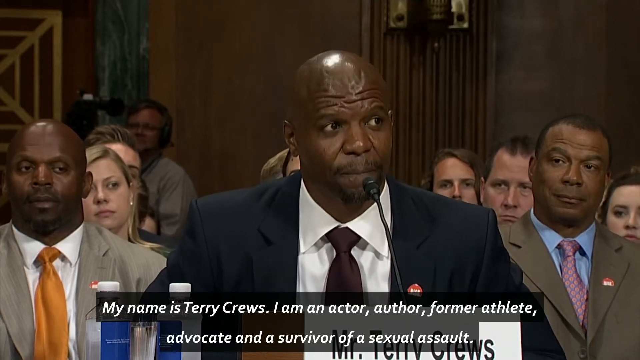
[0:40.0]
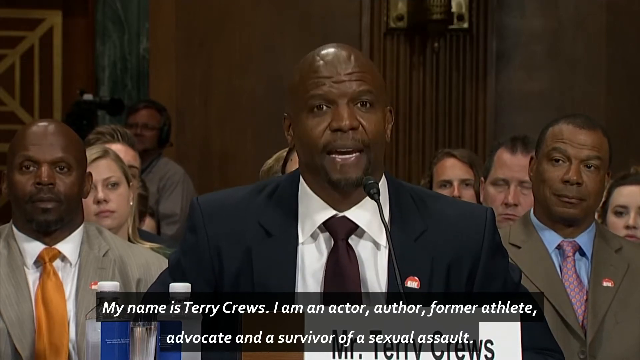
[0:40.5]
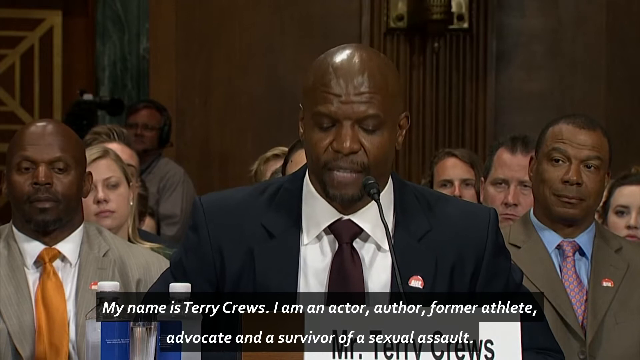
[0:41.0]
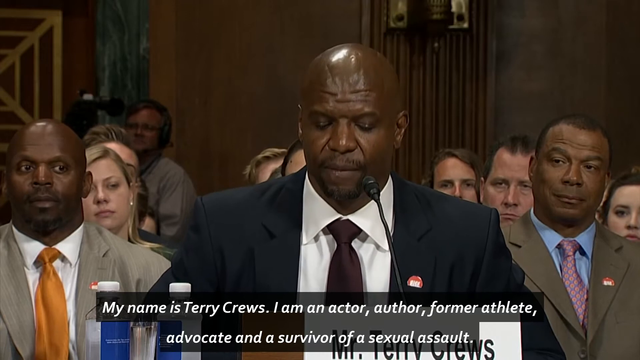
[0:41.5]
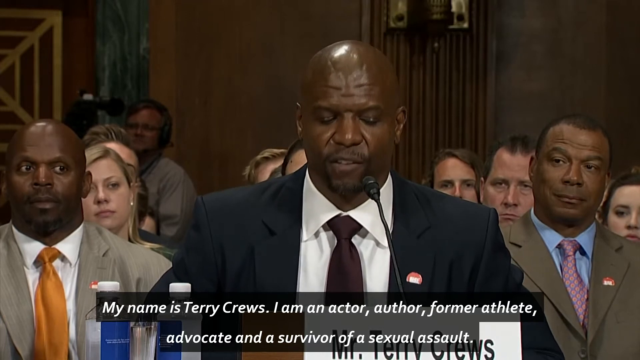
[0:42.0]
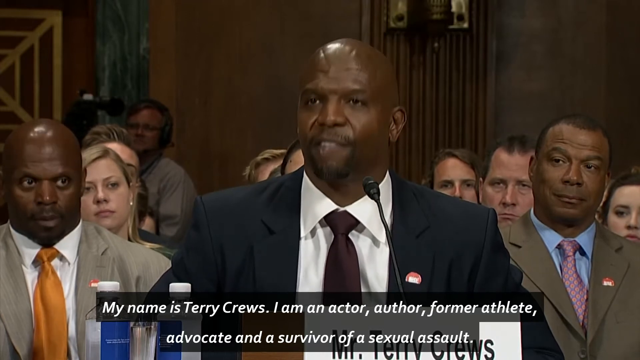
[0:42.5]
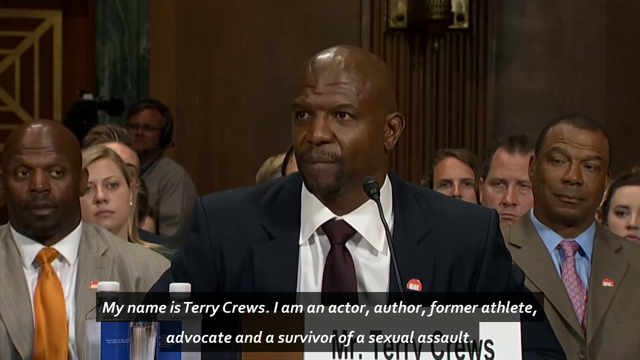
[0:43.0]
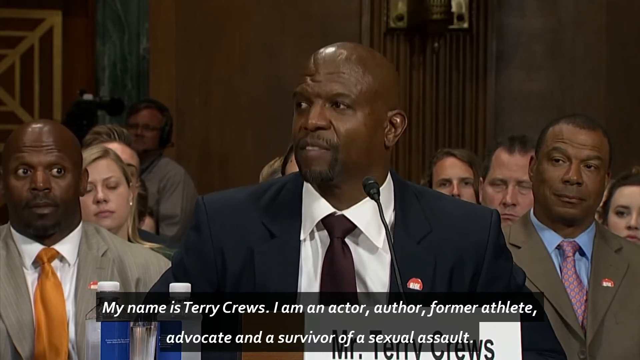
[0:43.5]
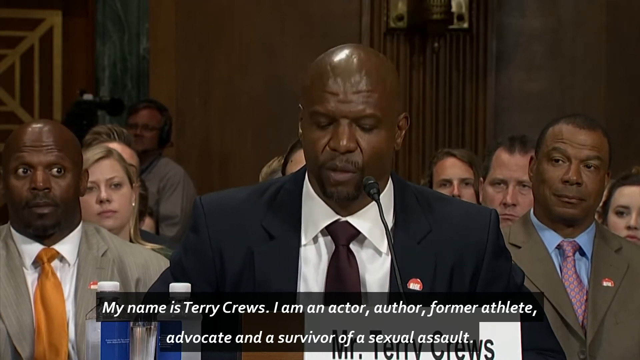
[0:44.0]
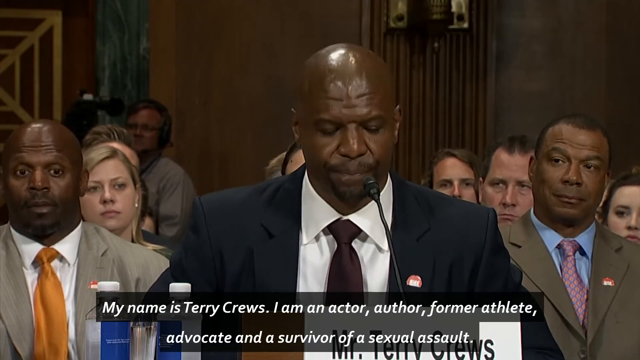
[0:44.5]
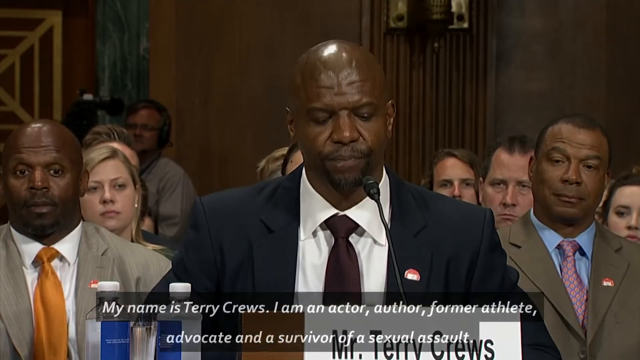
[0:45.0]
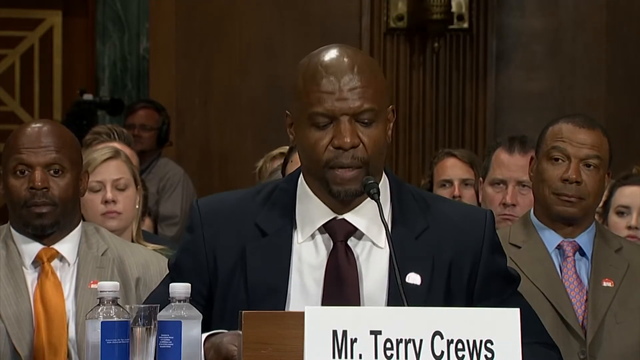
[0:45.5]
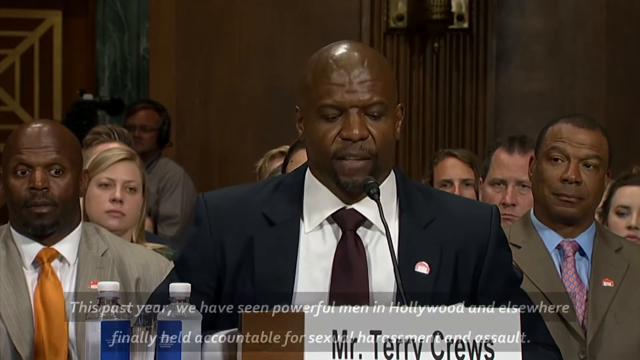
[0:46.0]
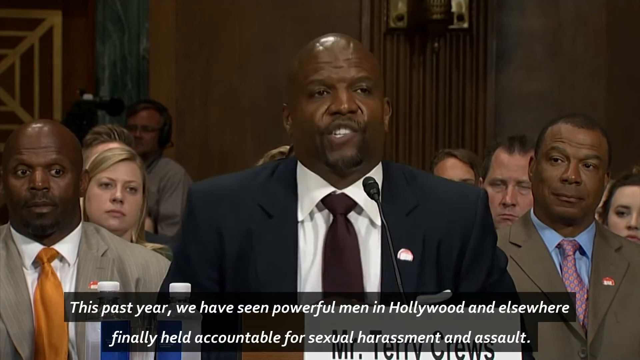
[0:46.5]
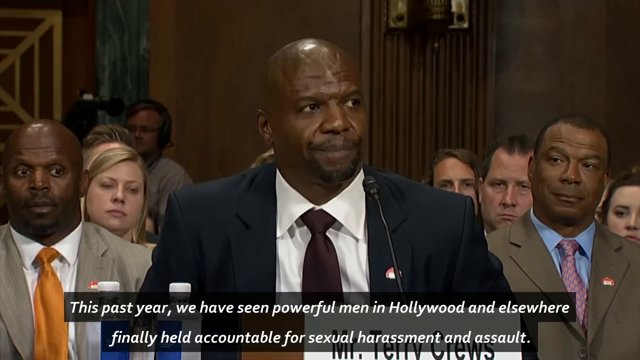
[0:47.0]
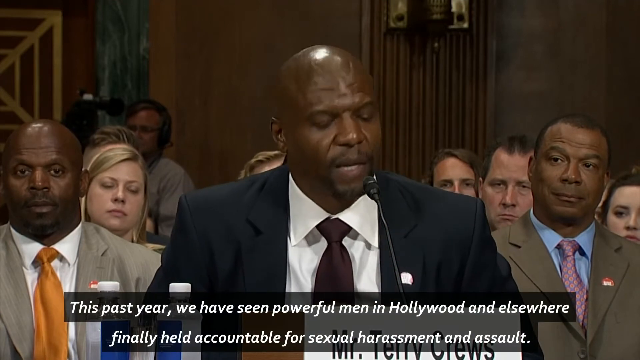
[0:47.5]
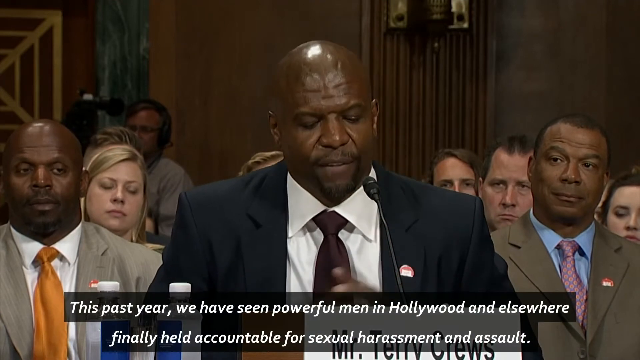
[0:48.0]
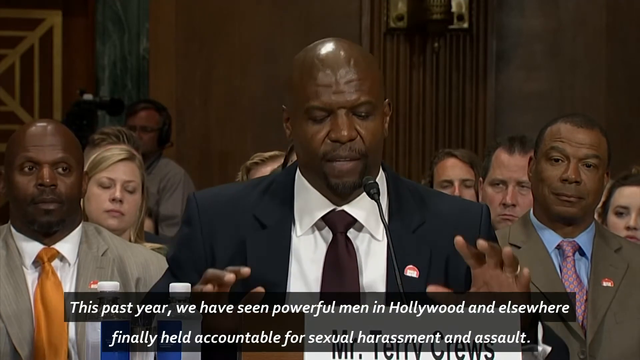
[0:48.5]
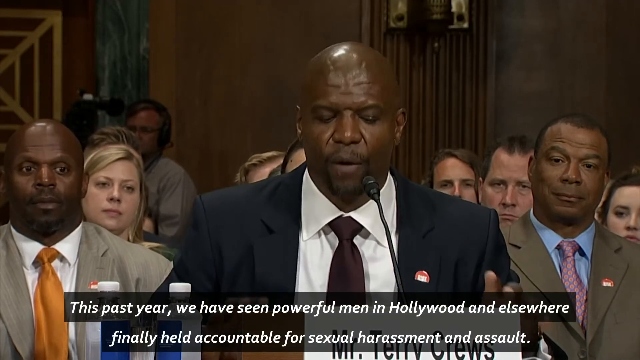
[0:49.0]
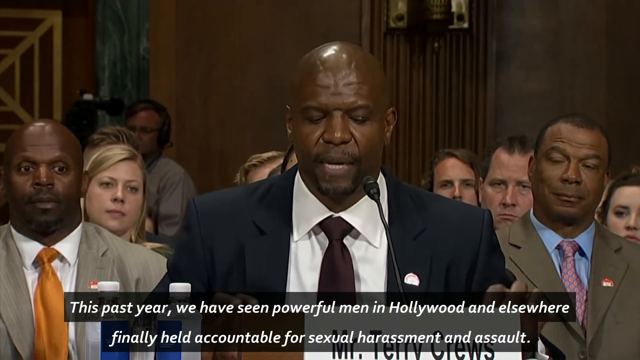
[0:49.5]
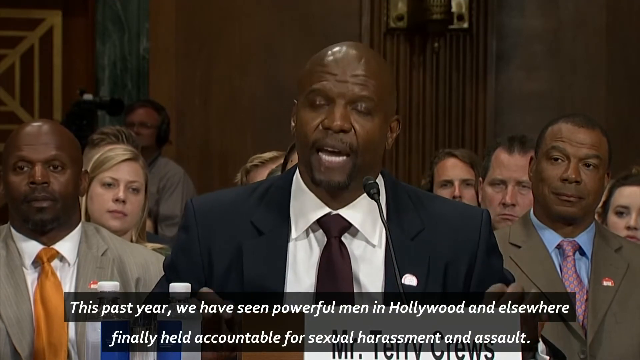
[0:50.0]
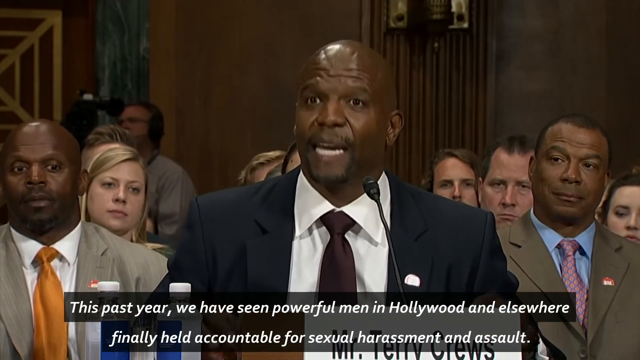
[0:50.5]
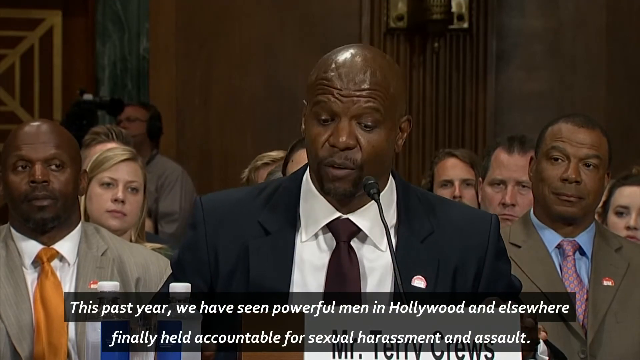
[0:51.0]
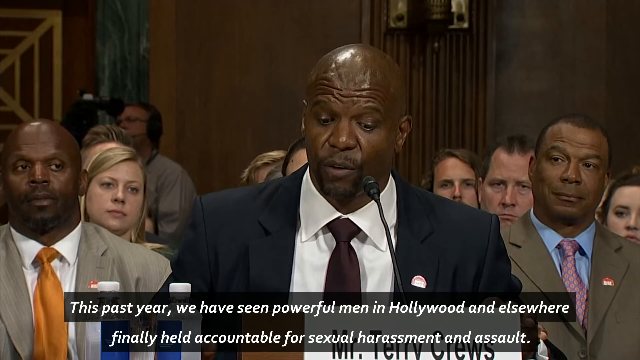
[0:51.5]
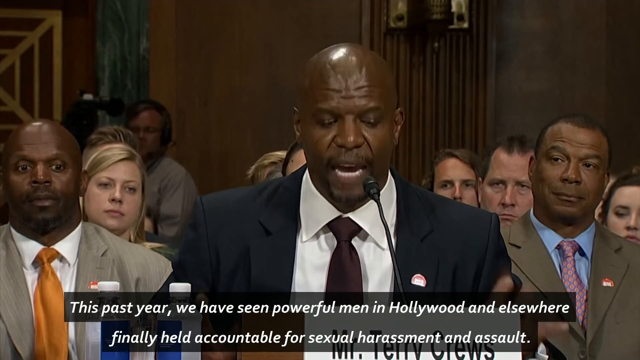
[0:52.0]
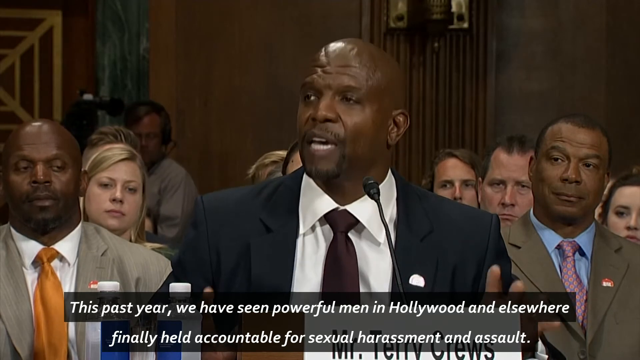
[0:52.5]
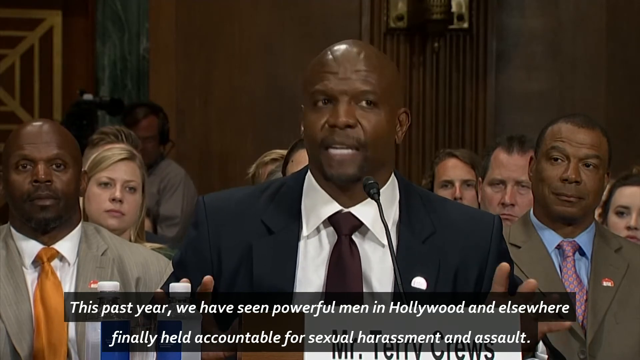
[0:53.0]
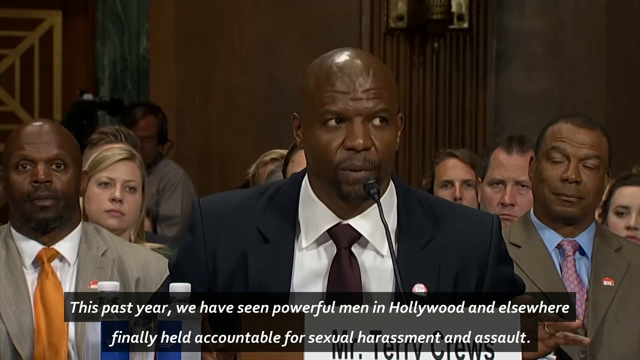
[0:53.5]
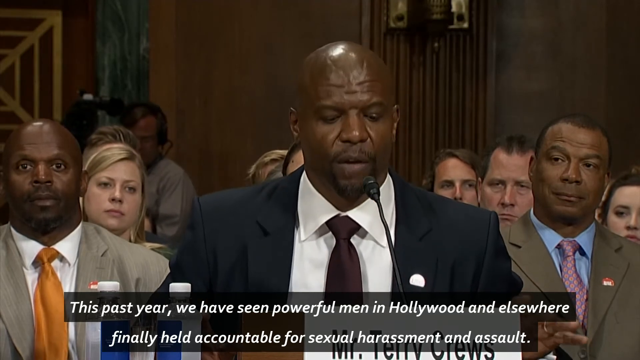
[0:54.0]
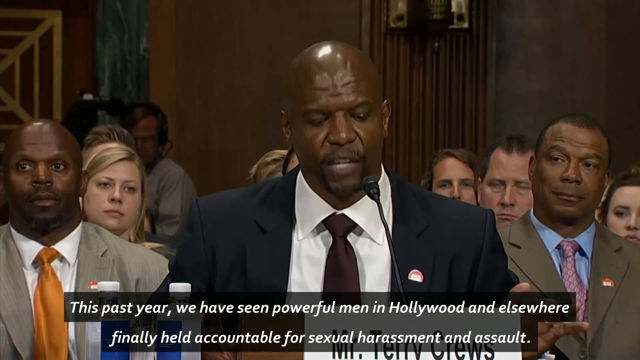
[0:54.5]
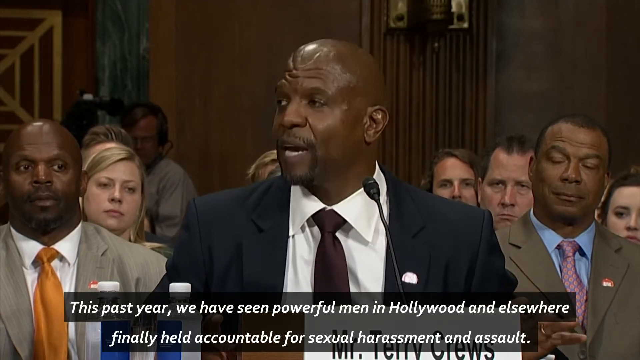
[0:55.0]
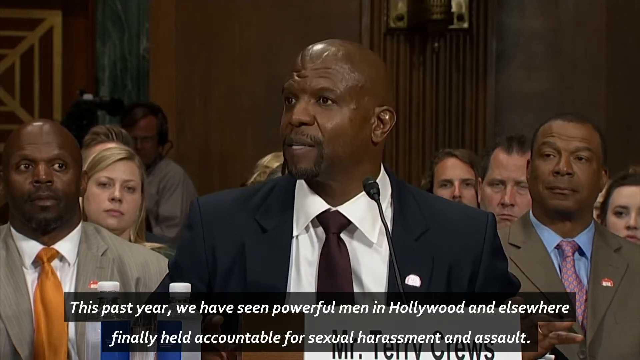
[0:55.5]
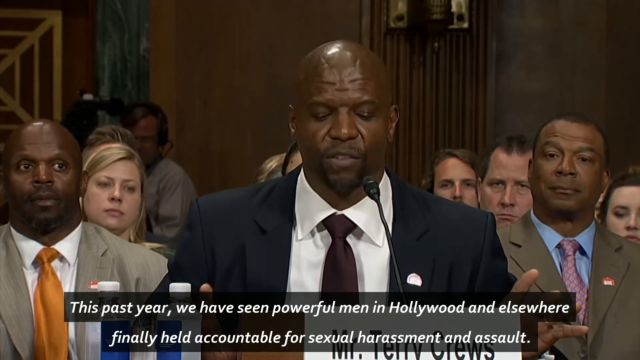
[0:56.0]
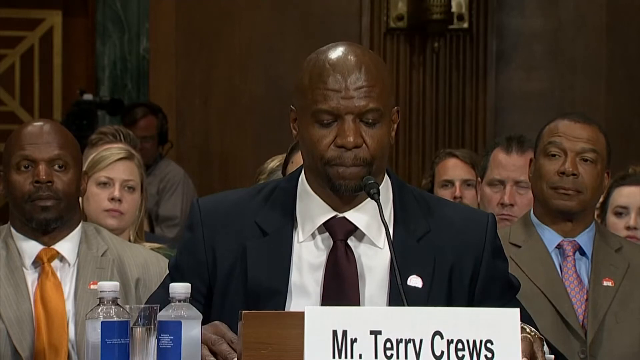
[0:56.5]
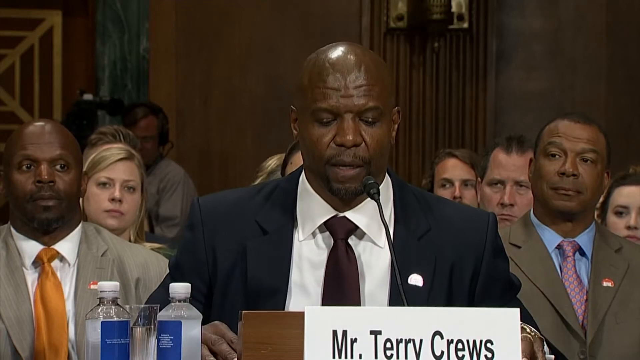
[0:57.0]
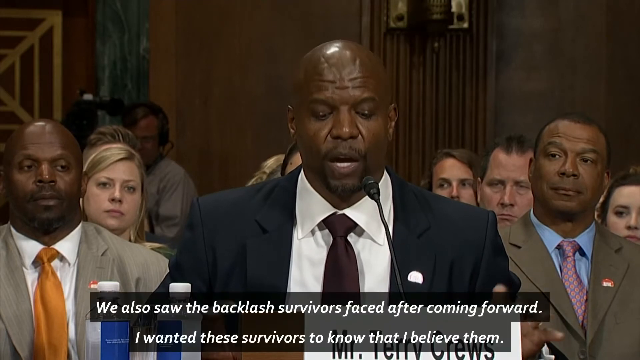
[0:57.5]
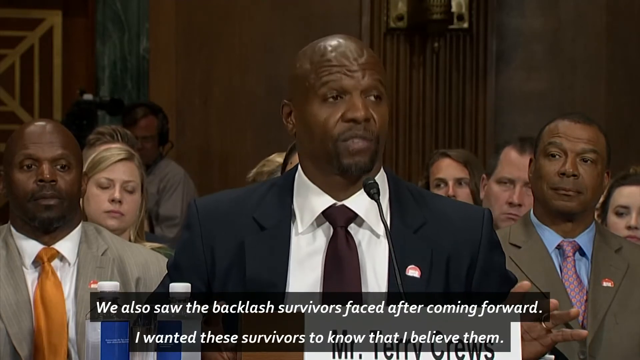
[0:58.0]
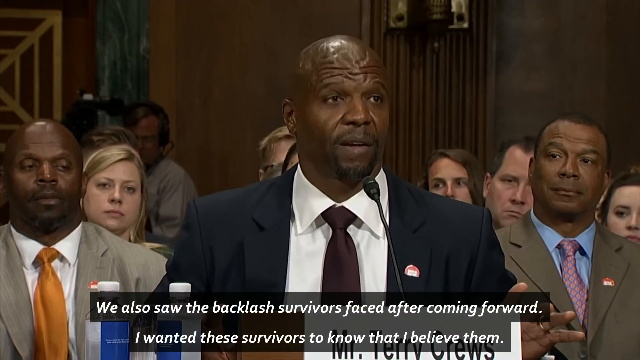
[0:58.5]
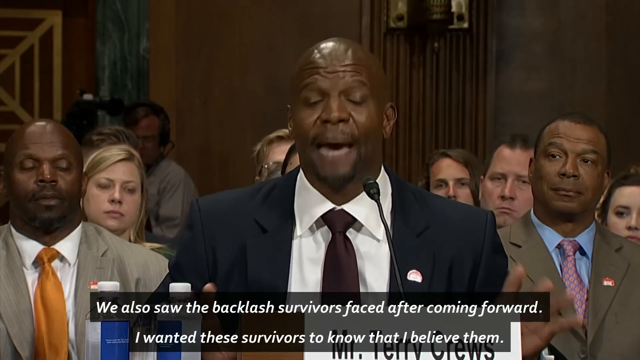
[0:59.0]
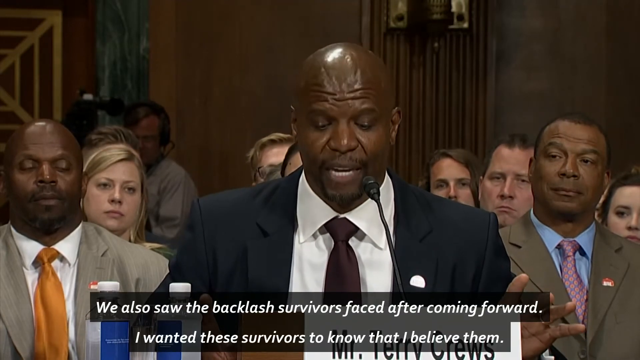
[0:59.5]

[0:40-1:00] Terry speaks at the podium, with some kind of red button pinned on the right side of his collar, talking into a small mic. Part of the view is blocked by what looks like two bottles on the screen. His name, "Mr. Terry Cruz," is written in black text on a white card placed on top of the podium. The people behind him are listening, and everyone seems to be wearing the same red pendant. The man to his left wears a beige suit with an orange tie and a white shirt, and his head is bald. The man to his right wears a dark olive jacket with a reddish tie over a blue collared shirt and has a low Caesar haircut. Terry, who is bald, looks around as he talks.